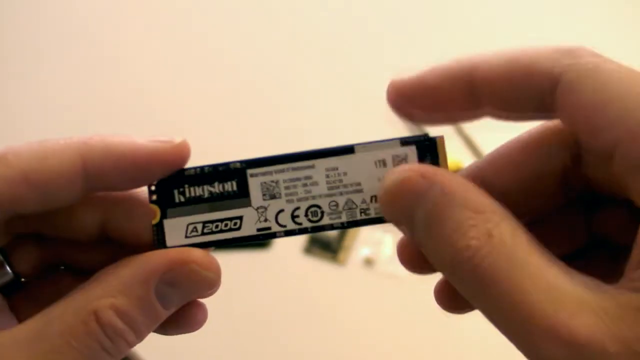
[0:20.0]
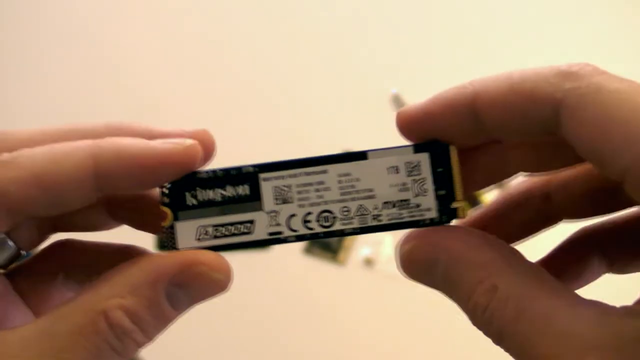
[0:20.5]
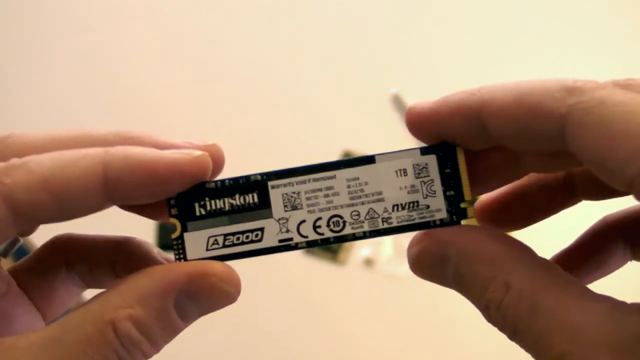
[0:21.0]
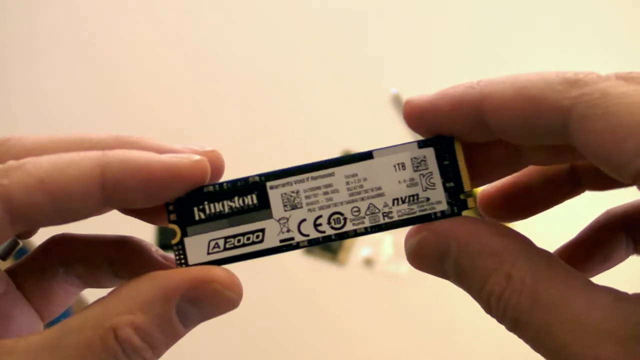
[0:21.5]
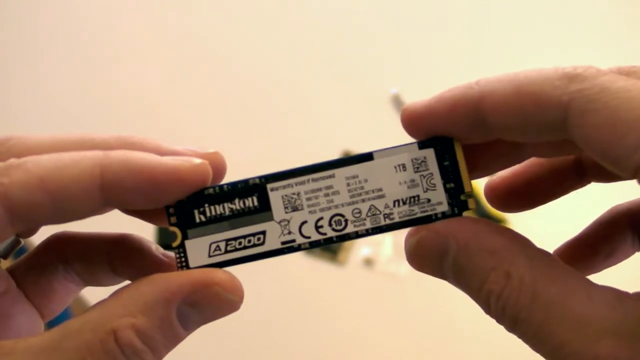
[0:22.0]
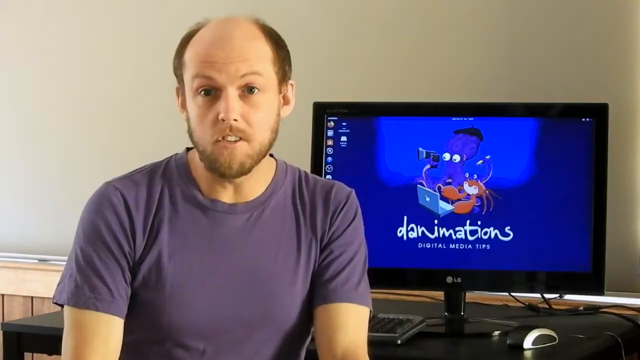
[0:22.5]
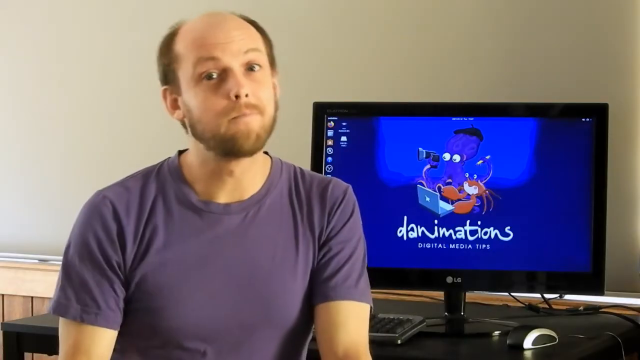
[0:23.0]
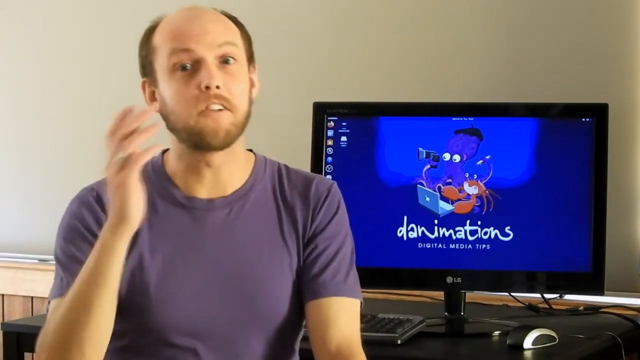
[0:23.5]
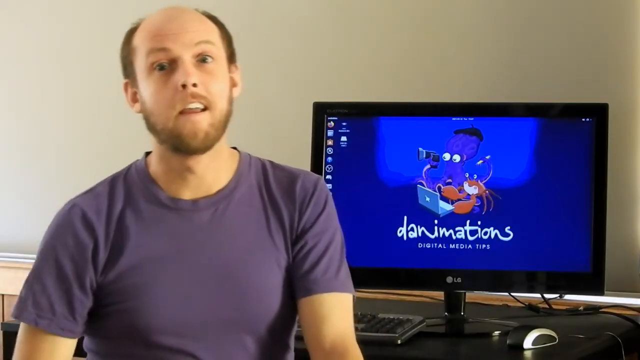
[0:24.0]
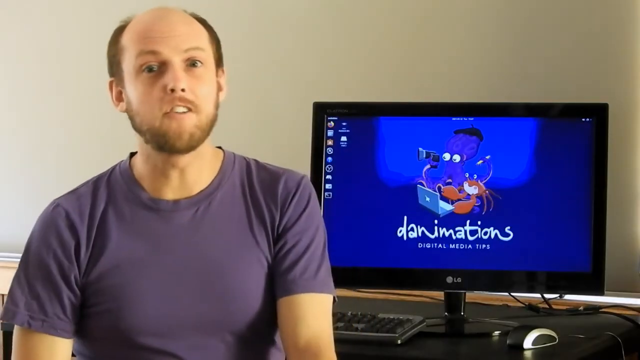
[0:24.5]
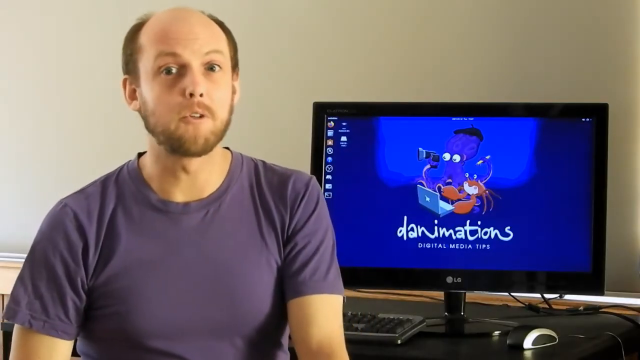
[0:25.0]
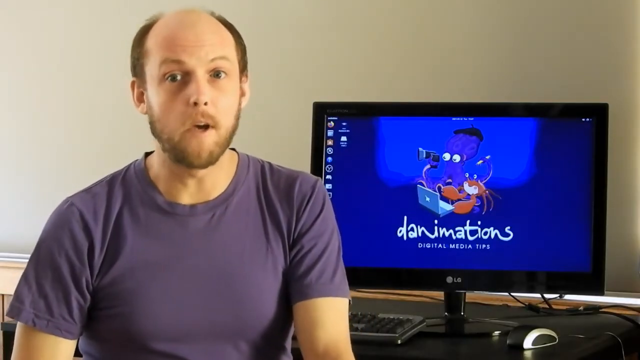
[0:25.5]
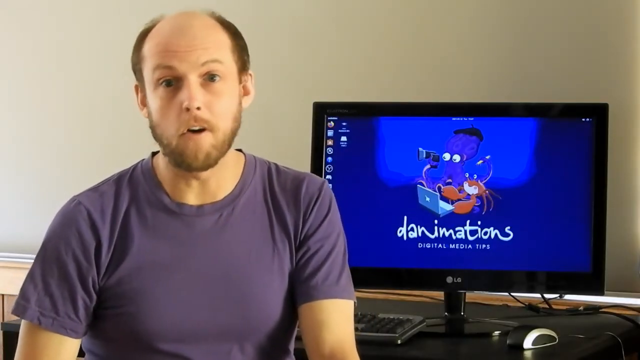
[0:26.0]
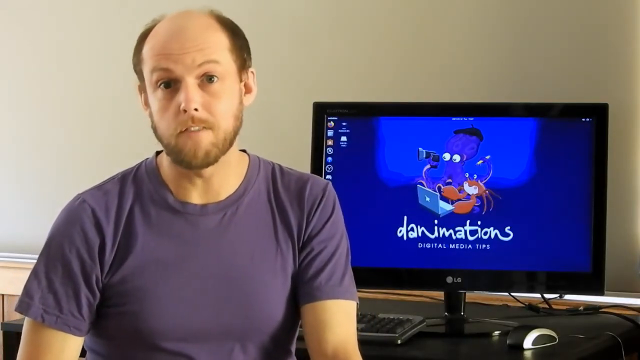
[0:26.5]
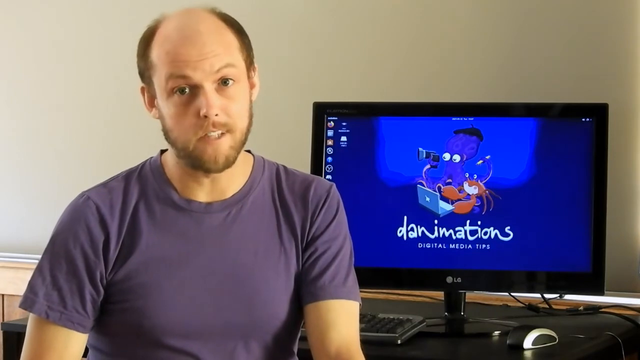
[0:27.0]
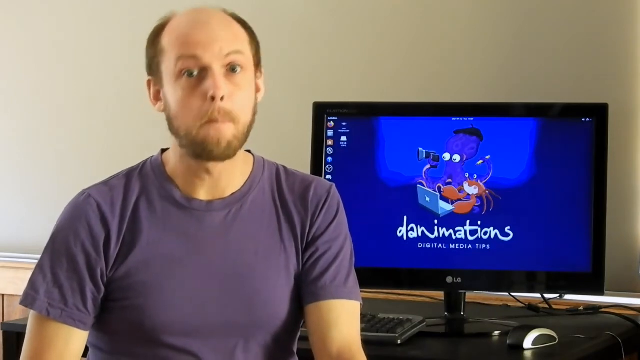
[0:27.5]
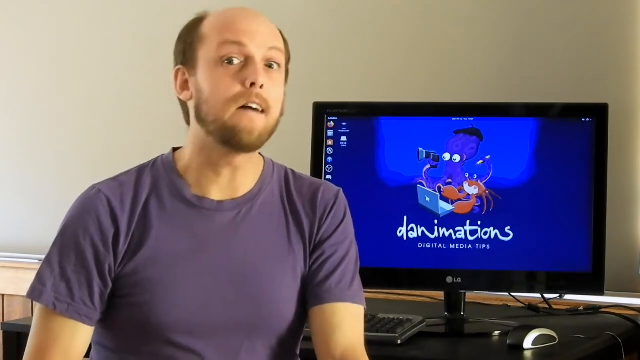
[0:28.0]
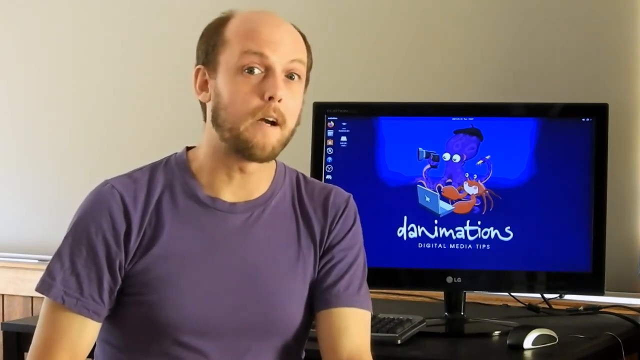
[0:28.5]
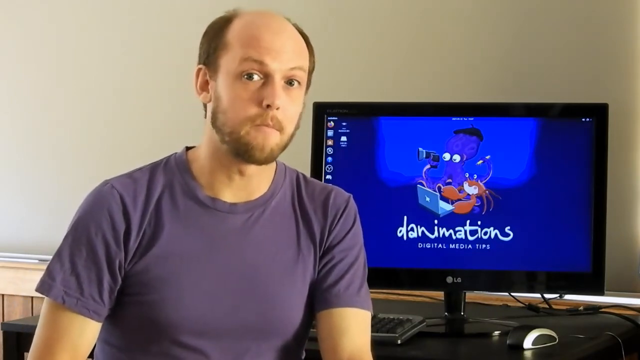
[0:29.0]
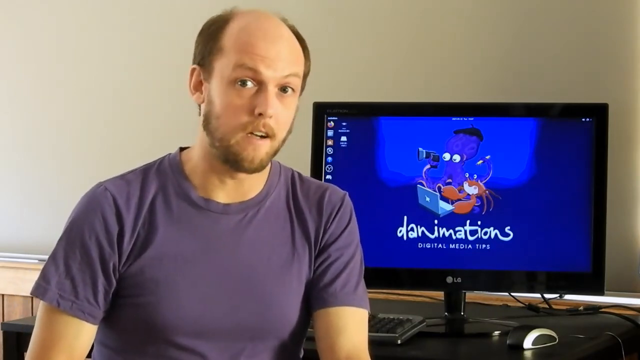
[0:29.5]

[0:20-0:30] Two hands of a white person come in from the left and right of the screen, holding a Kingston SSD; the label on its left-hand side appears to read "A2000." The scene then changes to a middle-aged white man on the left with kind of a horseshoe, medium-length haircut and a beard, wearing a purple shirt. On the right is a monitor facing the viewer, with a black bezel, a blue background and icons on the left. In the center of the screen, an animated squid and crab with really big eyes look through a camera and a laptop, and below them white text reads "Danimations." The man in purple keeps talking, using his hands for gestures every once in a while and looking reasonably animated. The monitor on the right has an LG logo at the bottom.